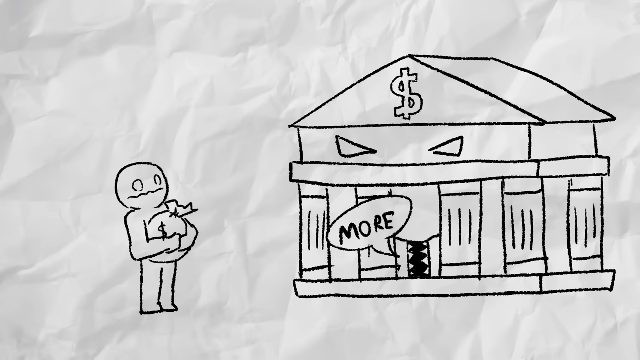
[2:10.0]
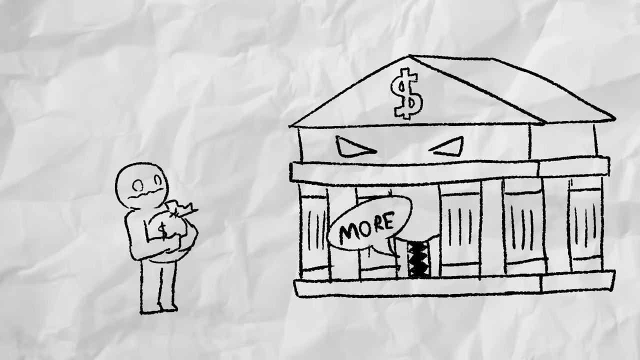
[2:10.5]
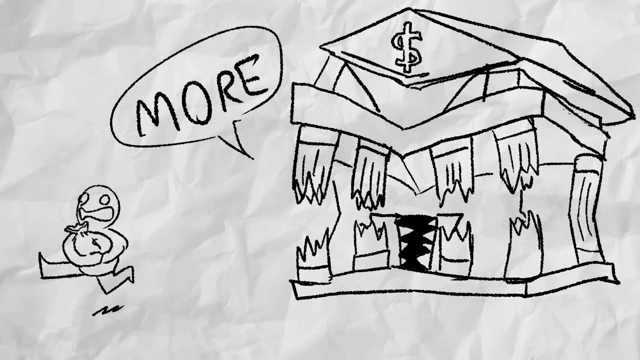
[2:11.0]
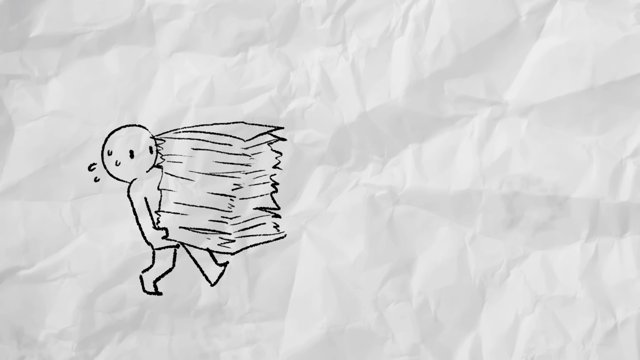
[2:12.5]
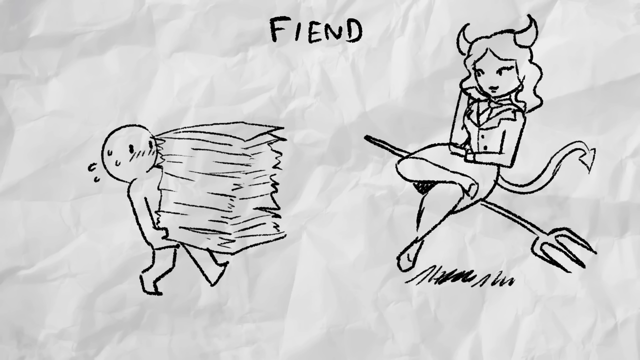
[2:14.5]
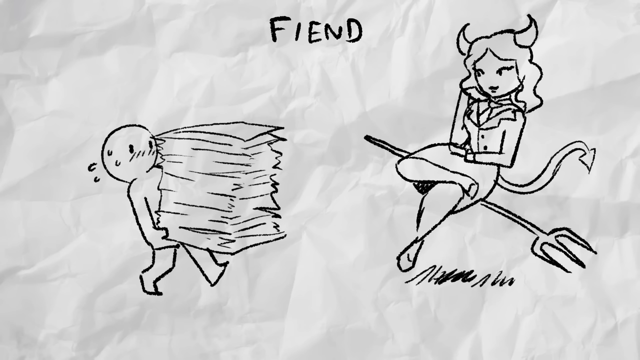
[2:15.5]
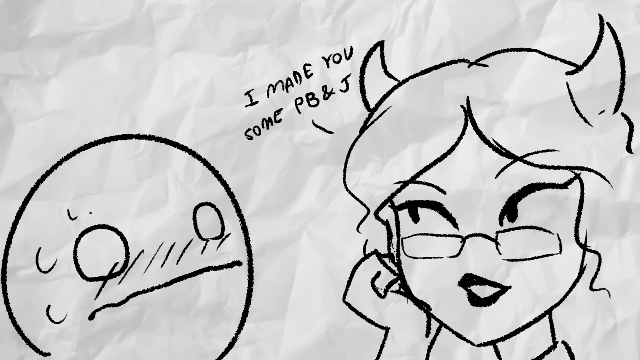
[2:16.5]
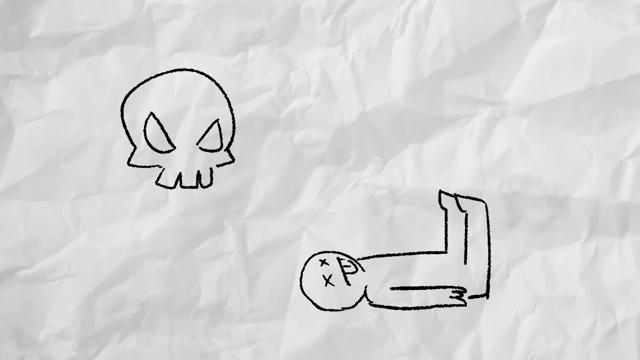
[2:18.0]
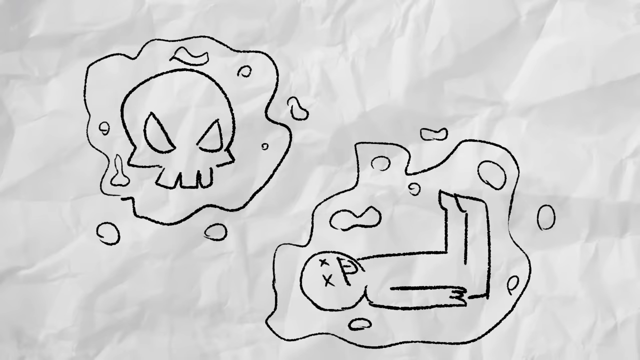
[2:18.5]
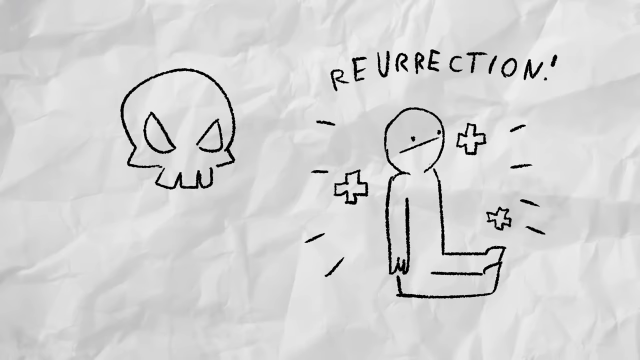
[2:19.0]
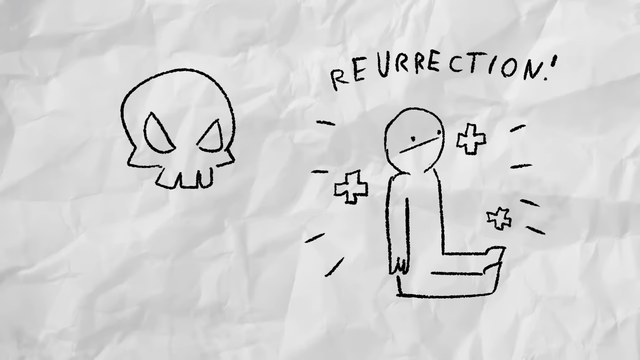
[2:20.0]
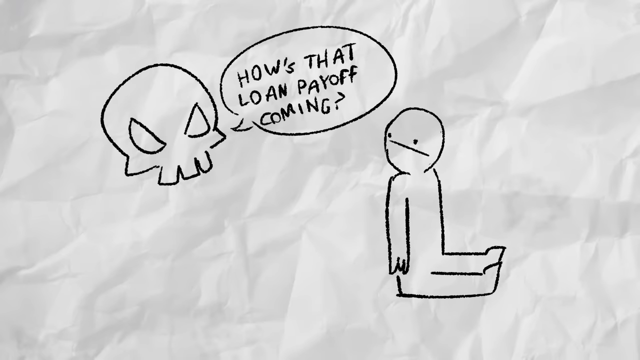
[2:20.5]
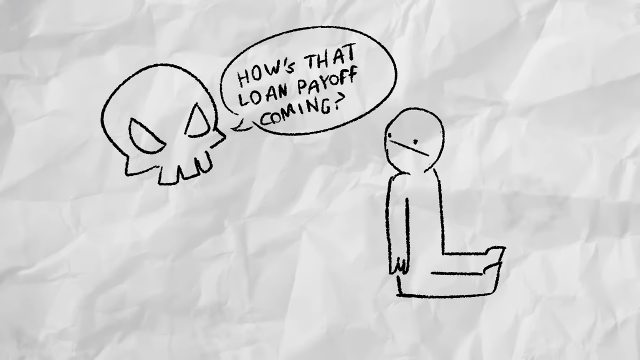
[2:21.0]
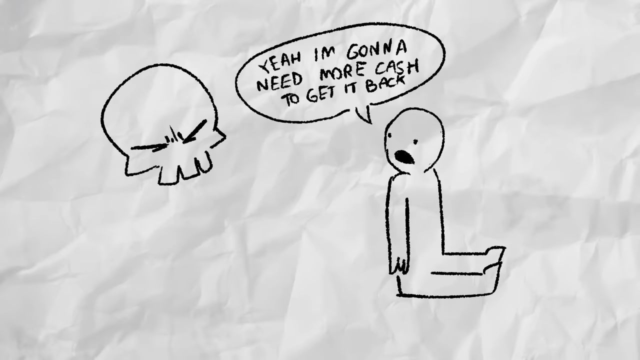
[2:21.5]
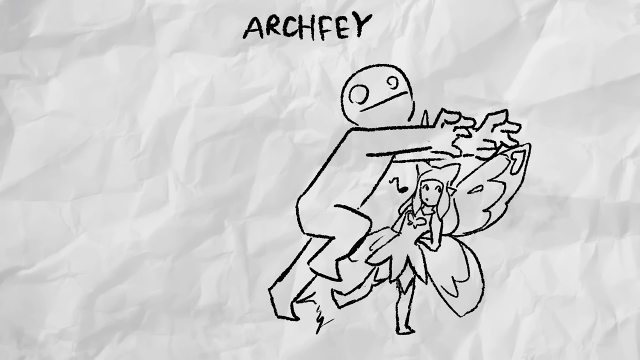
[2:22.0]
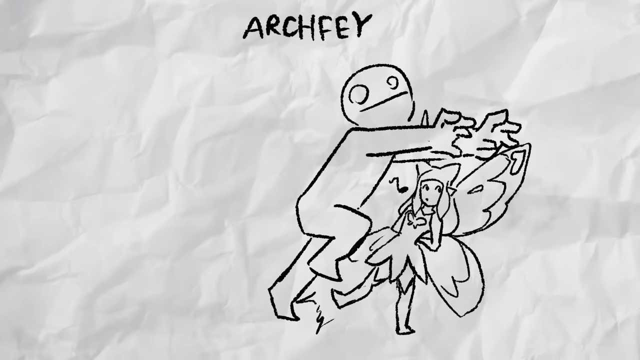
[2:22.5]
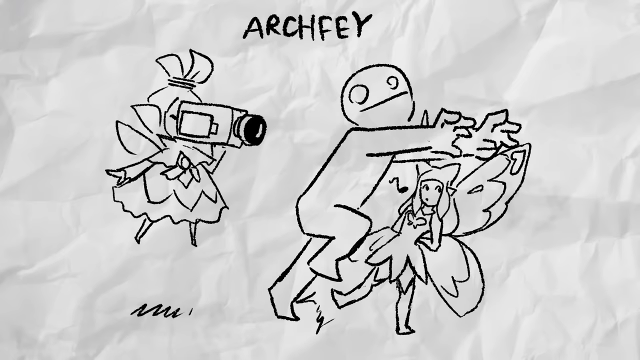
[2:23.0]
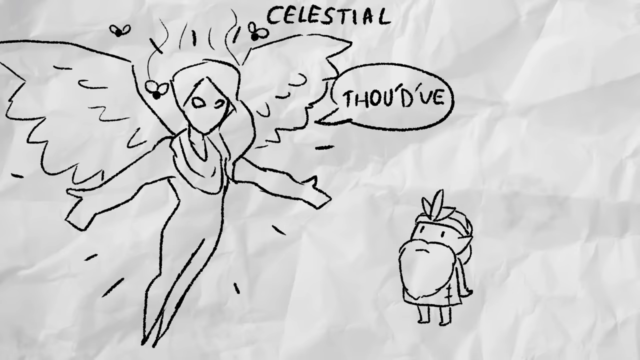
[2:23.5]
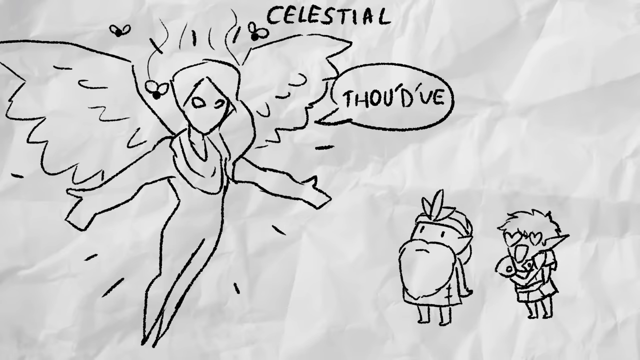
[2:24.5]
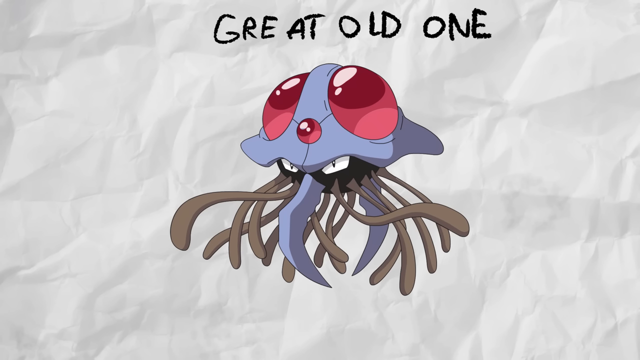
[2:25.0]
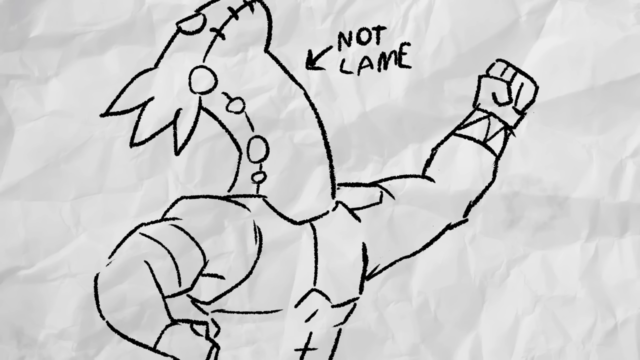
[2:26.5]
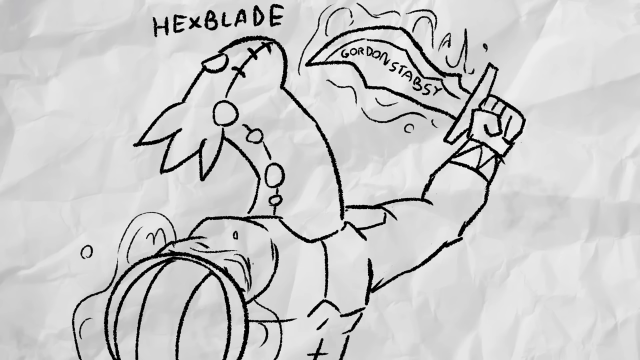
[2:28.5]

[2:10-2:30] In the hand-drawn animation, a bank building with a mouth and eyes has a text bubble reading "more" directed at a man trying to deposit money, with a money bag. The man looks distressed. The building gets bigger and says "give me more". Then a woman says "I made you a PB&J"; she is marked as an enemy, a spell is cast on this person, and it is a trap the person fell into. More hand-drawn characters appear saying different things that make no sense; the words are maybe targets for the game.